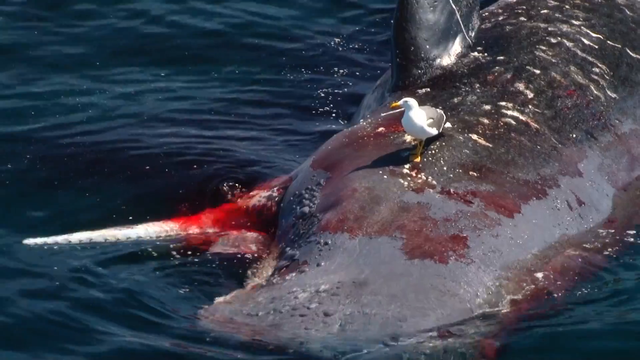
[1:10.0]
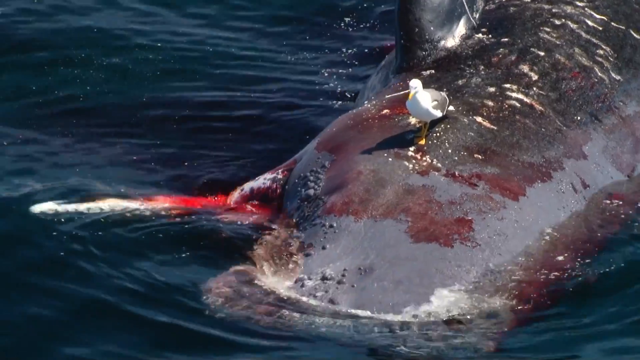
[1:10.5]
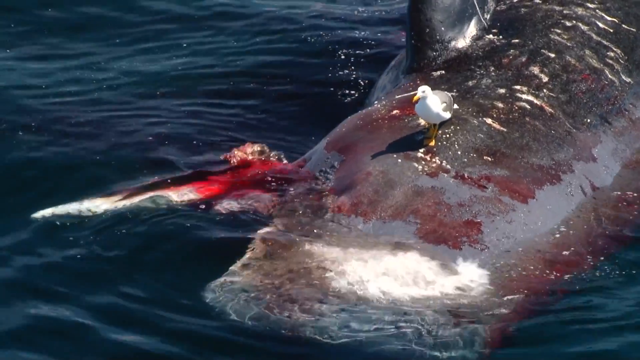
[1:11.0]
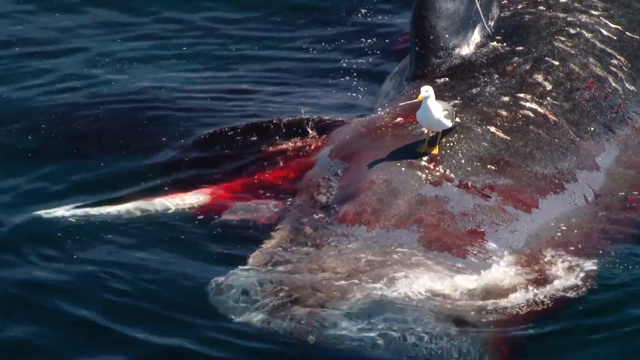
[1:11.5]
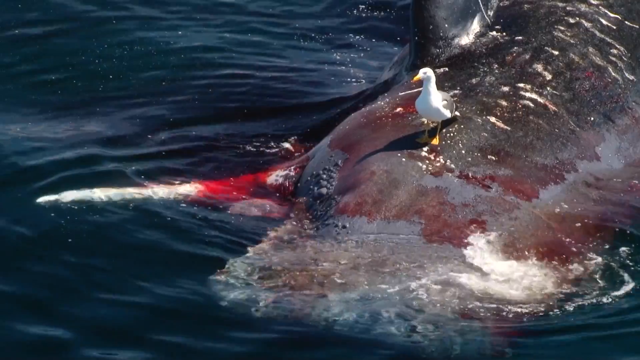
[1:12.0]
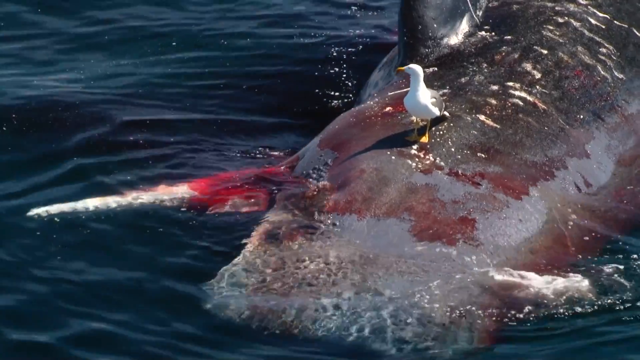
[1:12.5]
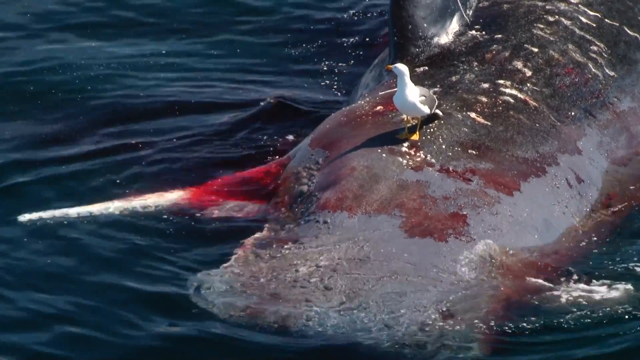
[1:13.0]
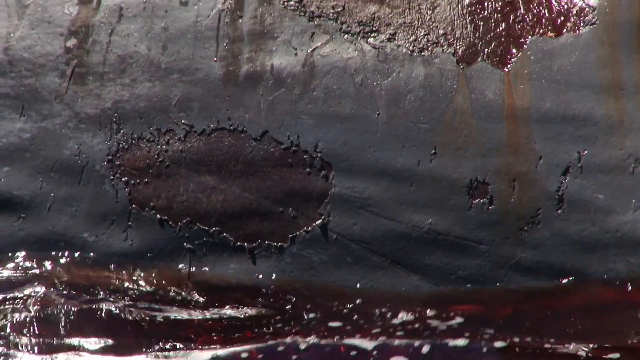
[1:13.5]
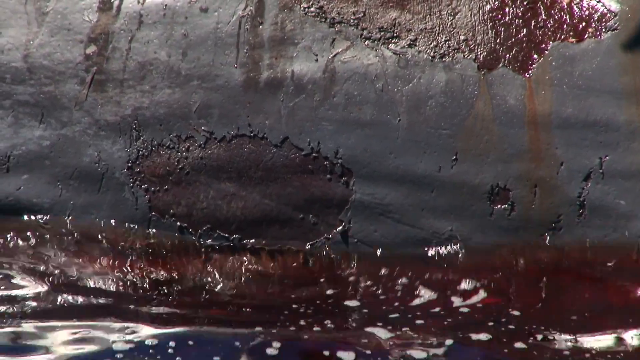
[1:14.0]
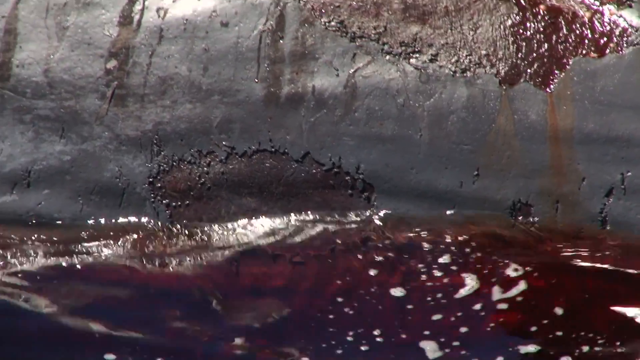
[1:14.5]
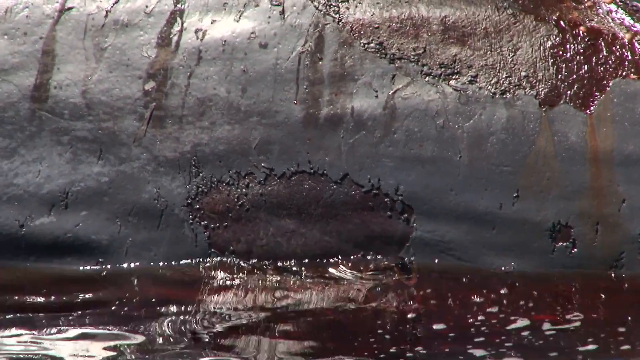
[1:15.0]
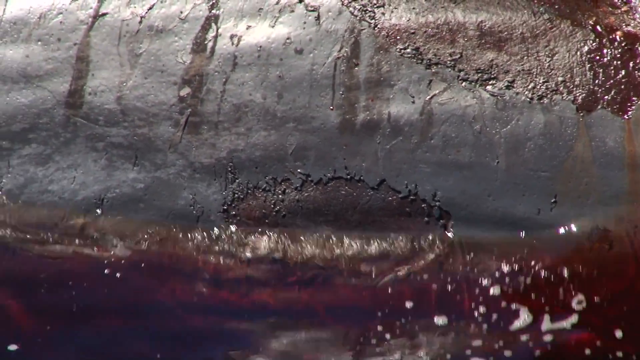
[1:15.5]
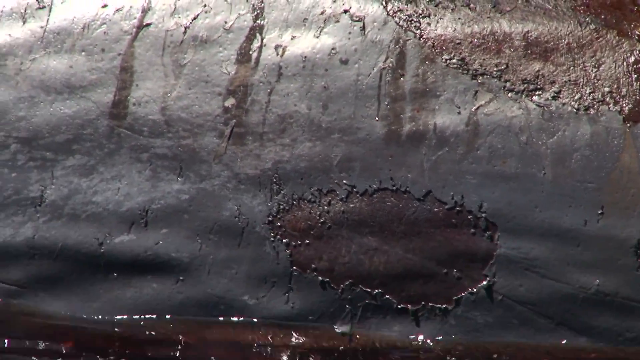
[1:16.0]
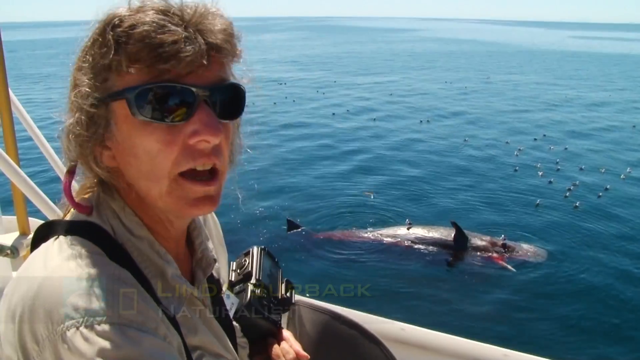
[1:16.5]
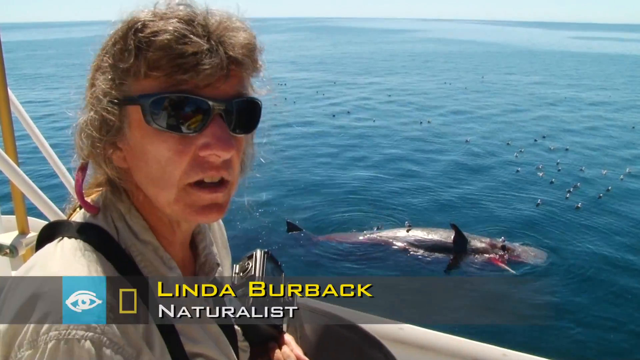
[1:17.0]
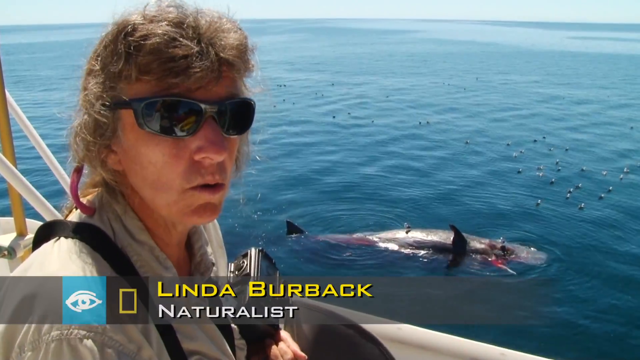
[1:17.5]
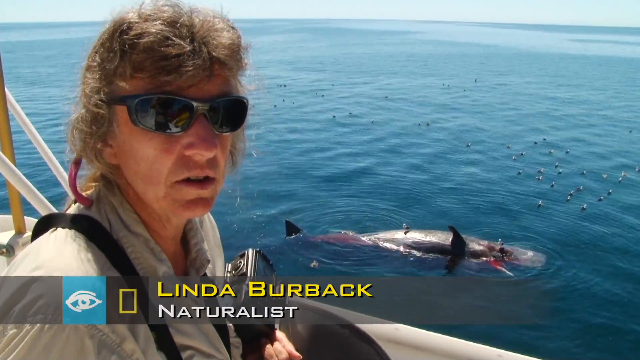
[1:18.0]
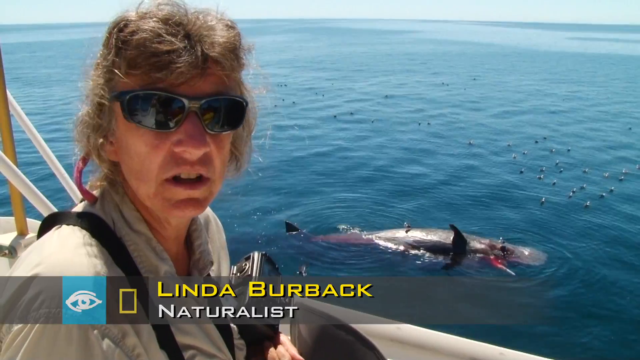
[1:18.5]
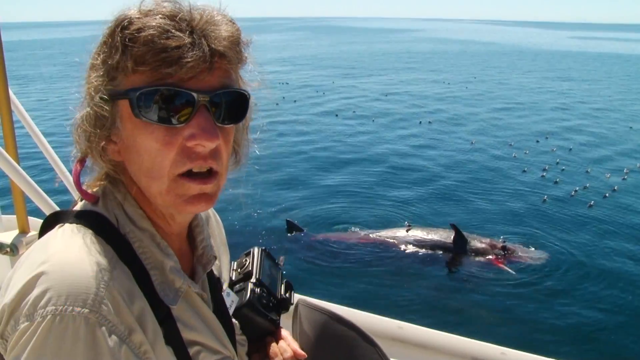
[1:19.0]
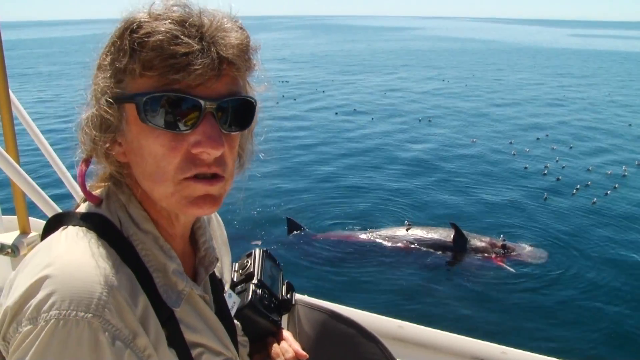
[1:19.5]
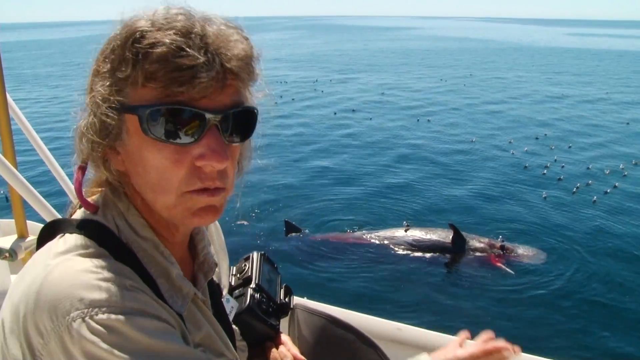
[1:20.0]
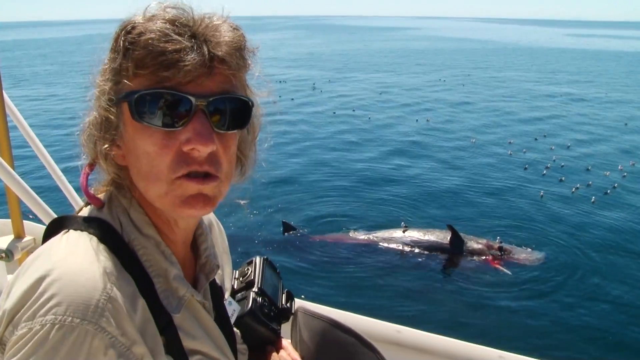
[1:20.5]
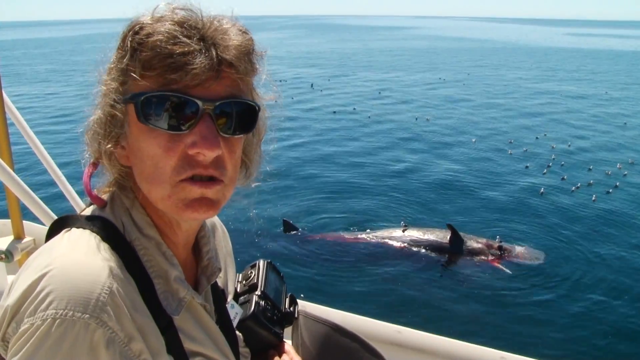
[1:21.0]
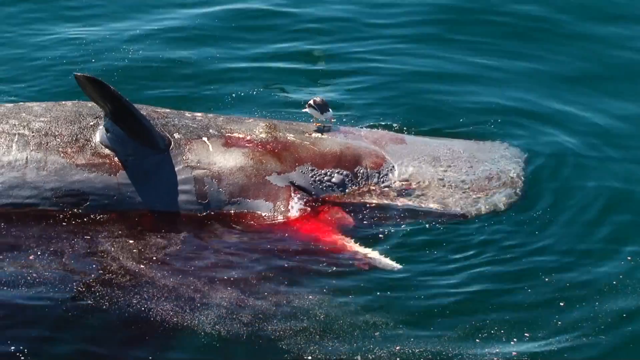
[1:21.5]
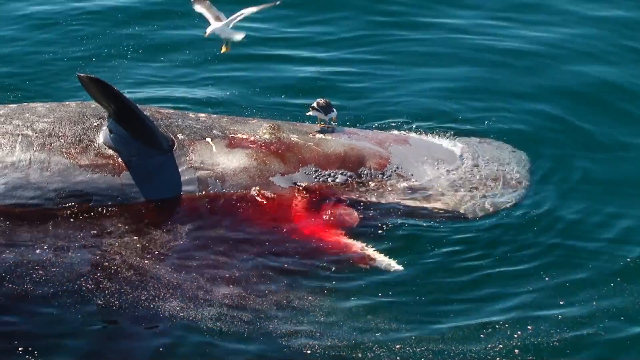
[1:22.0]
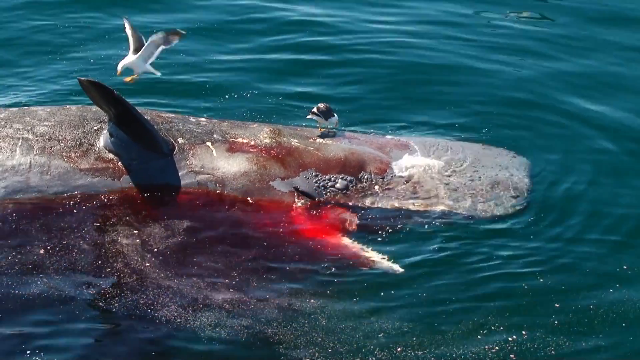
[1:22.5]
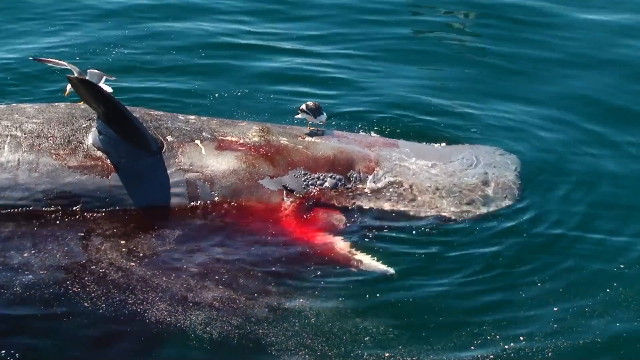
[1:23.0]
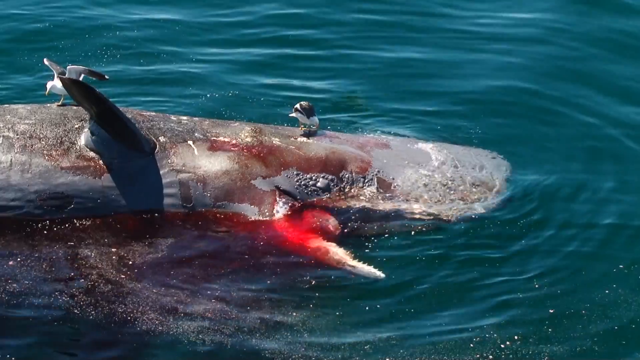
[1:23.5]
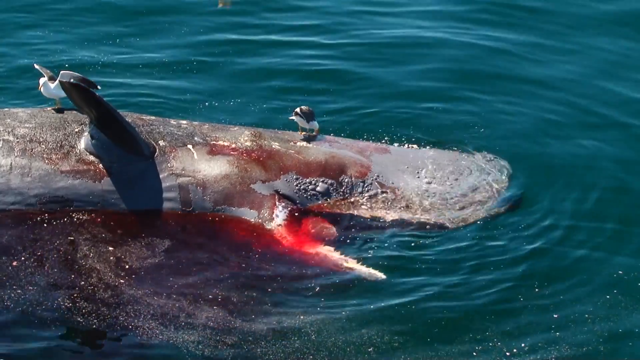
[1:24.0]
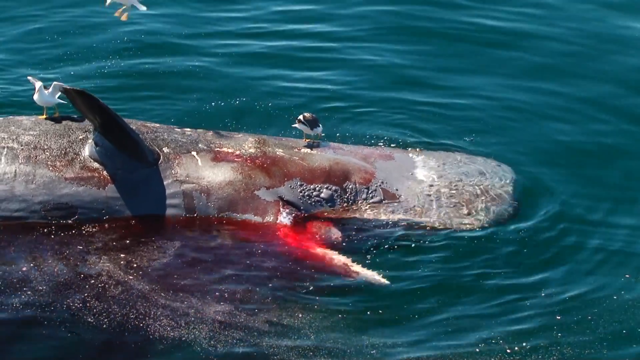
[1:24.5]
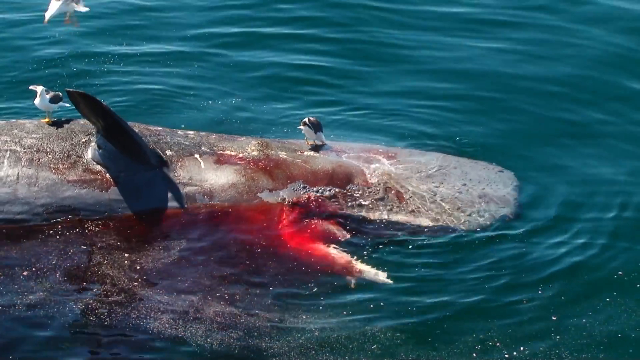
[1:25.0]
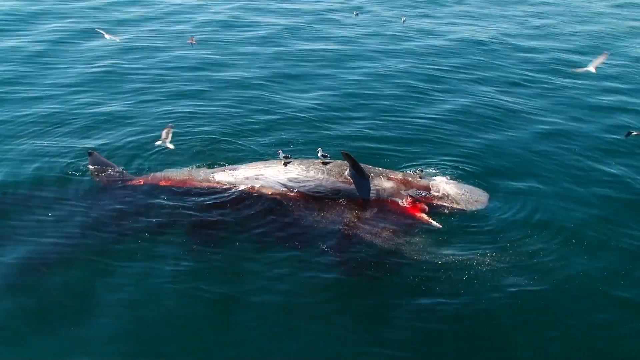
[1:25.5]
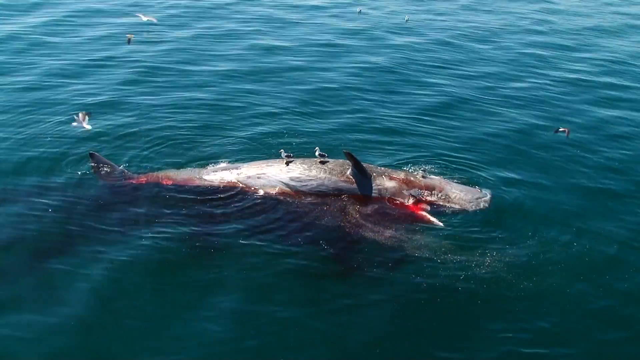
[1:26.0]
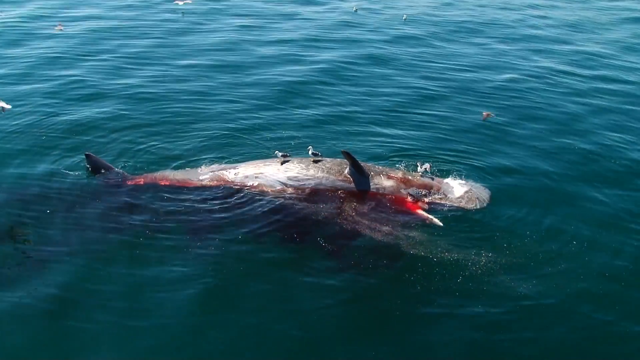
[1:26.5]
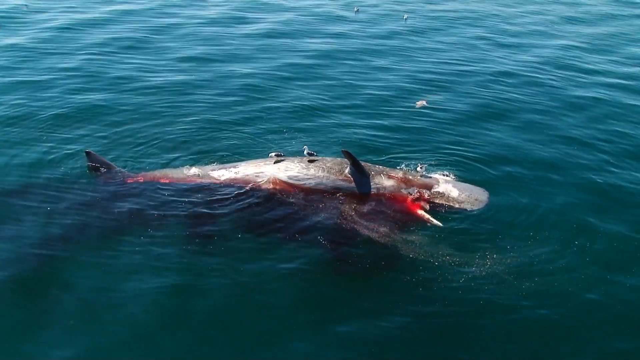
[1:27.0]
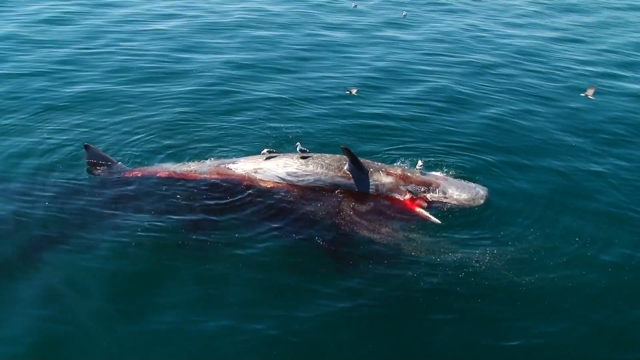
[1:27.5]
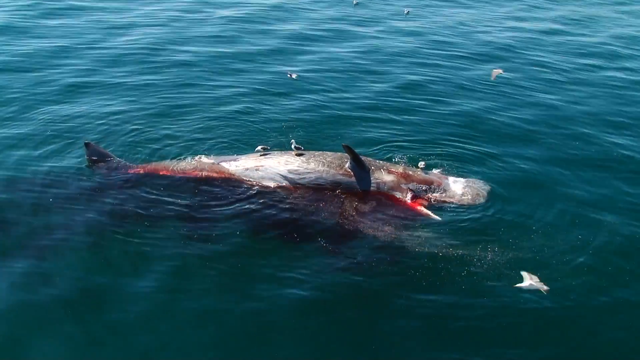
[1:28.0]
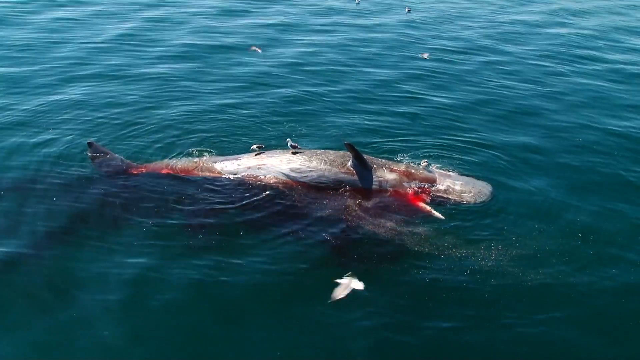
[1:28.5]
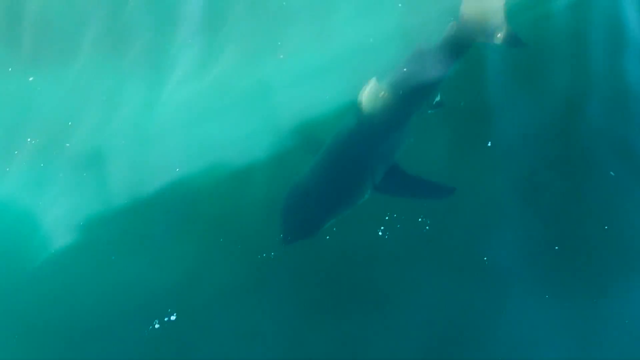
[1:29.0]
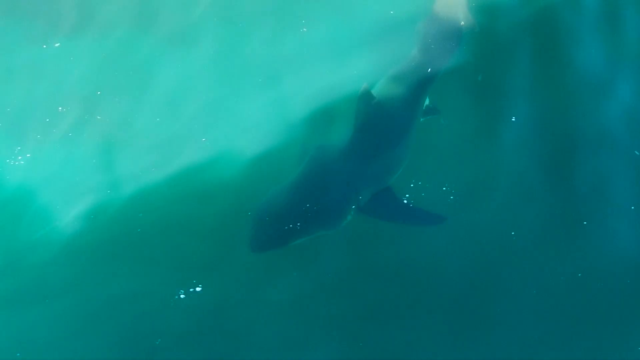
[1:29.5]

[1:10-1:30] The whale is in the water, which looks very dark. The whale shows burns or something taking the skin off. Linda Burback, a naturalist, has a camera, sunglasses, and light-colored hair, and wears a beige shirt like the one worn by the dark-haired woman. She holds something black in her hands and is talking. Out in the water, a bird sits on top of the whale, and many birds in the water seem to be approaching it, with more birds coming and landing on it. The whale's shadow is visible just beneath the greenish water, and something else floats toward the whale underneath the water, possibly a shark. The water around the whale looks bloody, suggesting some animal has already eaten from it or something is causing it to bleed. More and more birds keep arriving on the surface of the water, heading toward the whale.